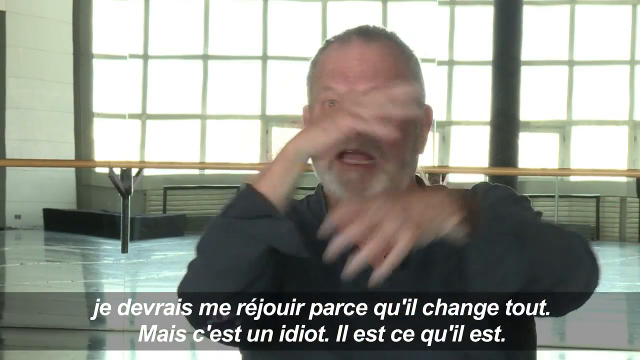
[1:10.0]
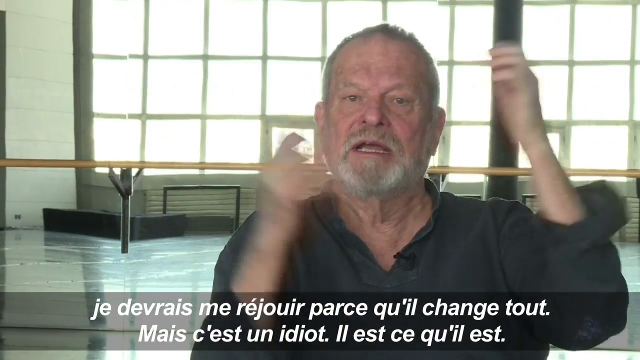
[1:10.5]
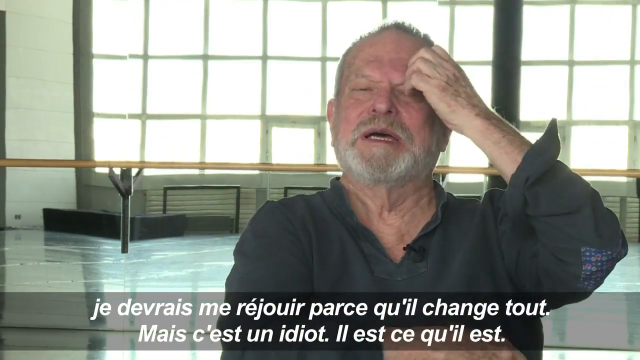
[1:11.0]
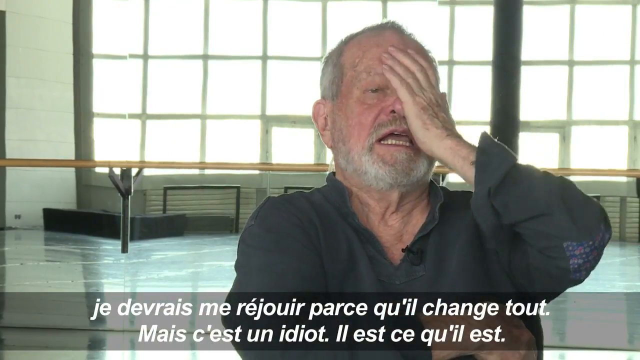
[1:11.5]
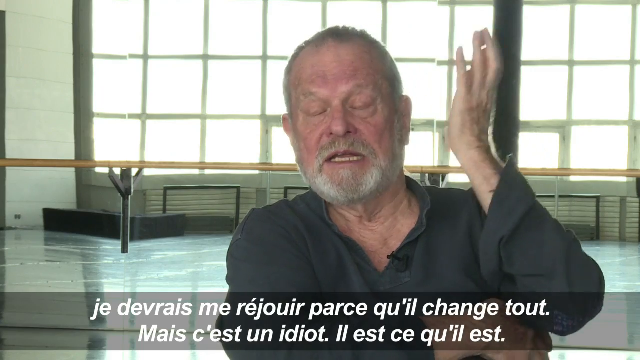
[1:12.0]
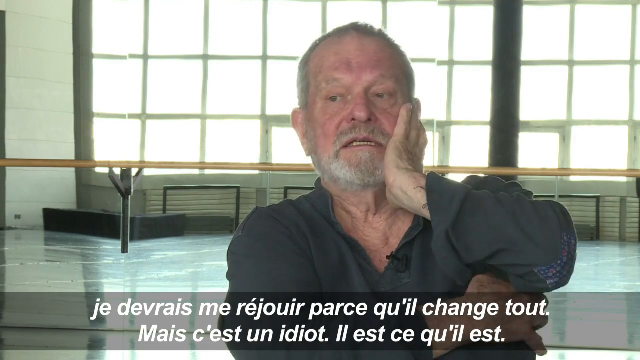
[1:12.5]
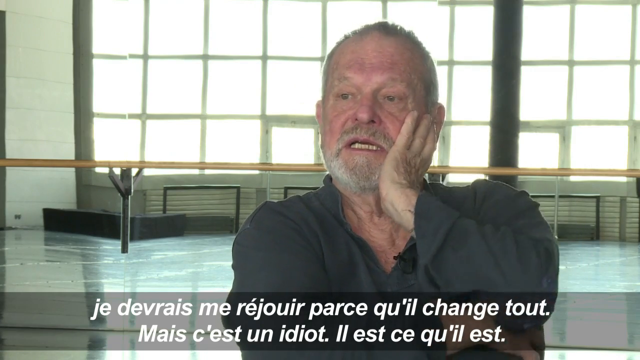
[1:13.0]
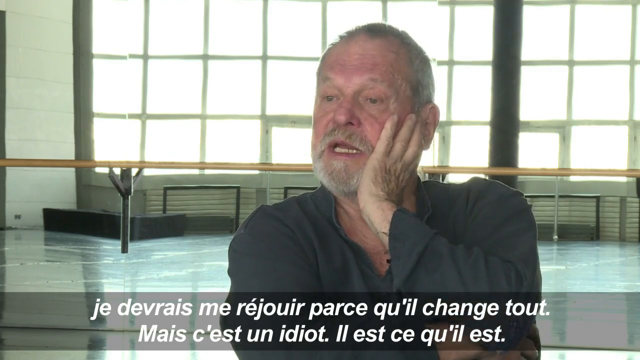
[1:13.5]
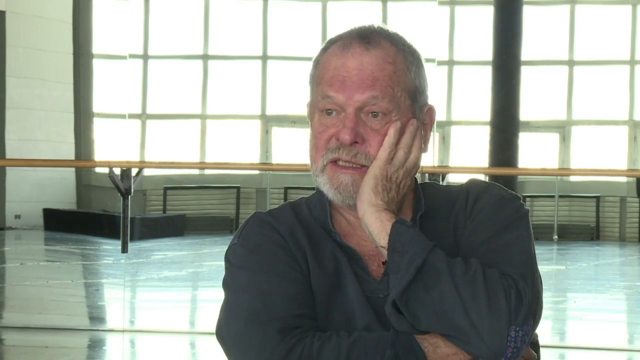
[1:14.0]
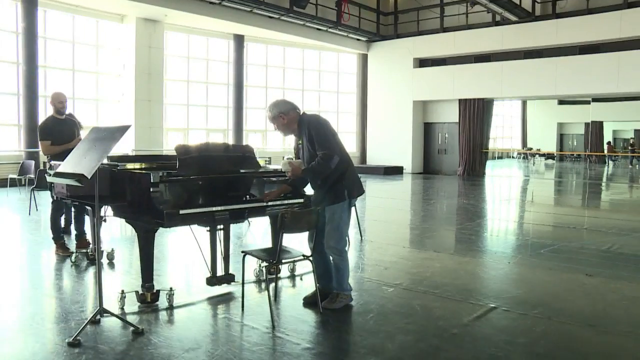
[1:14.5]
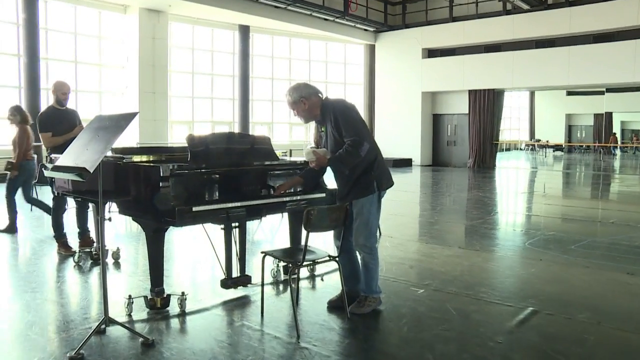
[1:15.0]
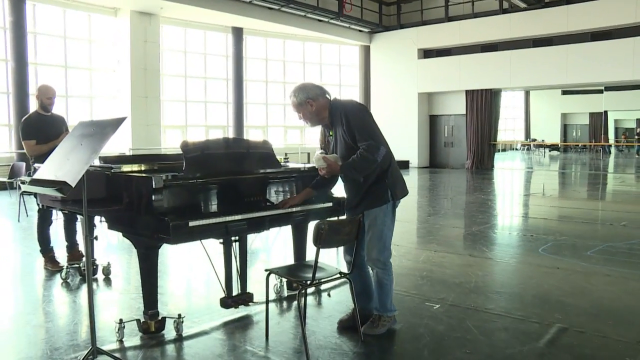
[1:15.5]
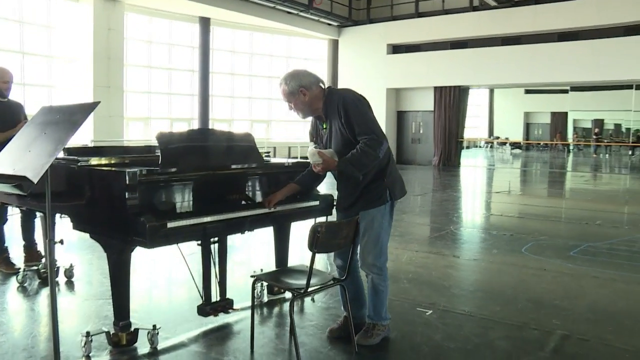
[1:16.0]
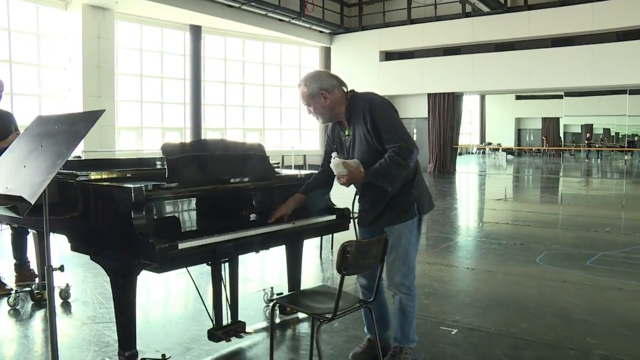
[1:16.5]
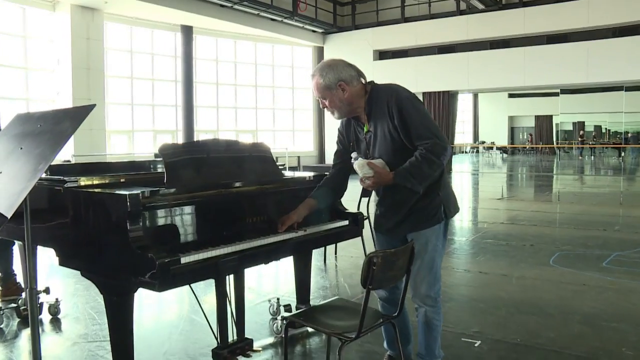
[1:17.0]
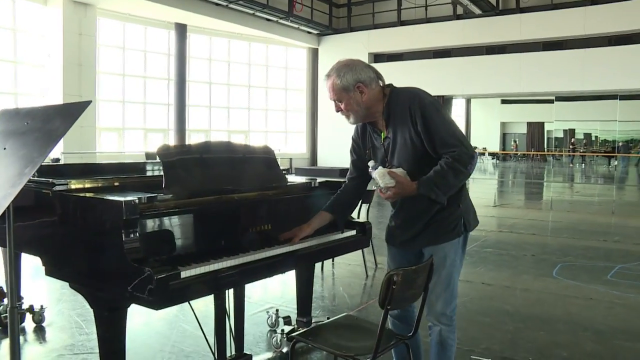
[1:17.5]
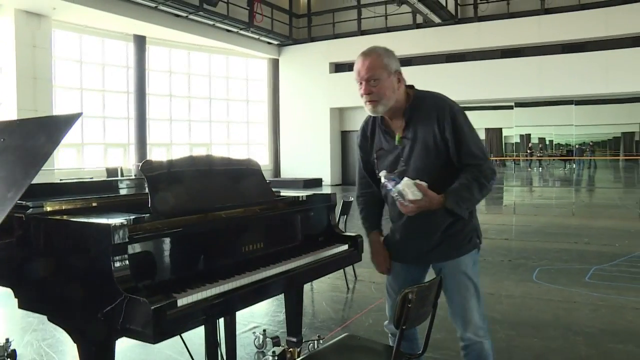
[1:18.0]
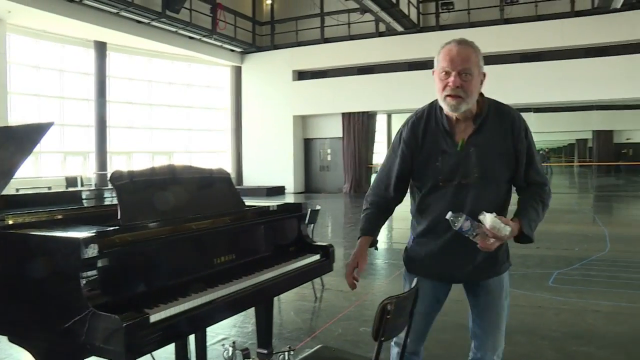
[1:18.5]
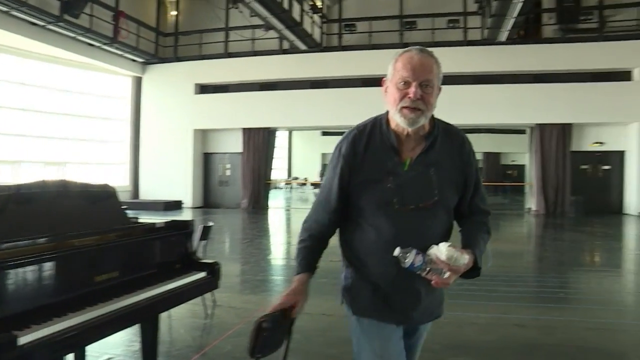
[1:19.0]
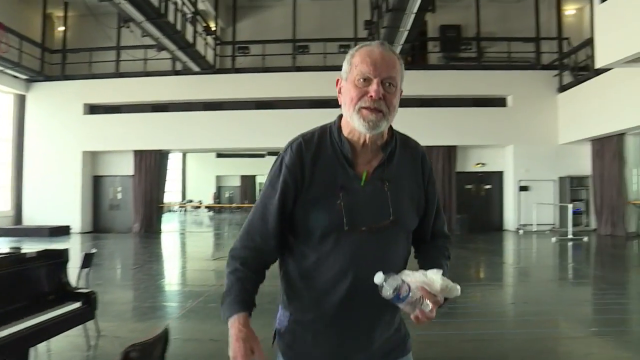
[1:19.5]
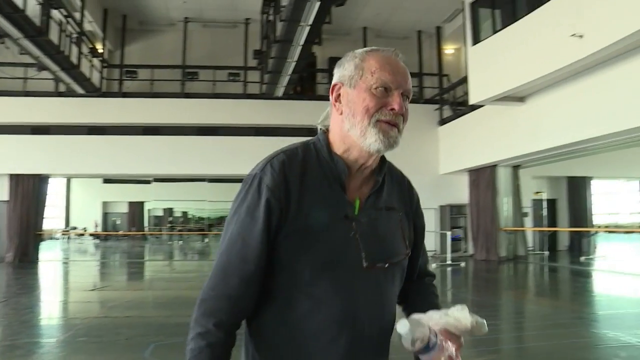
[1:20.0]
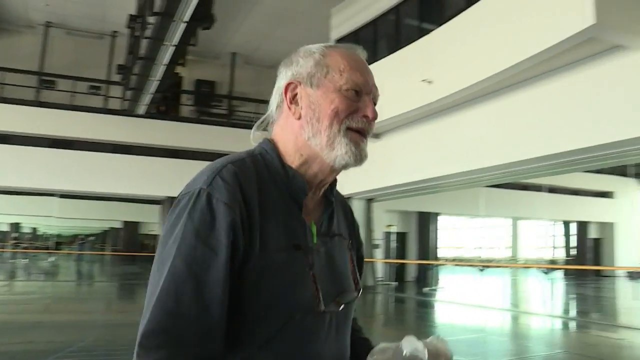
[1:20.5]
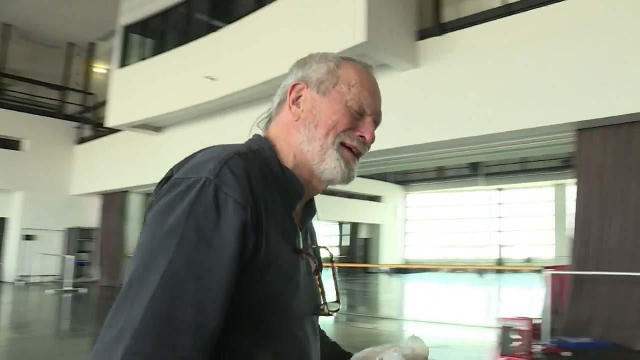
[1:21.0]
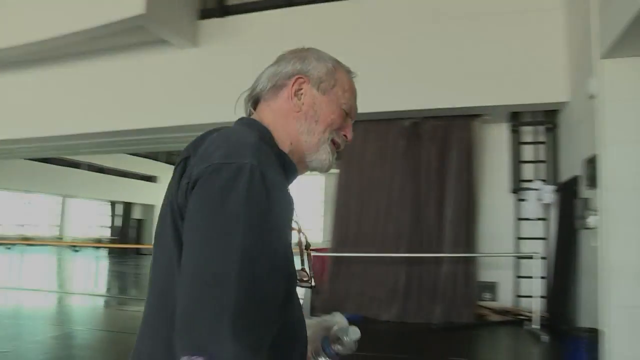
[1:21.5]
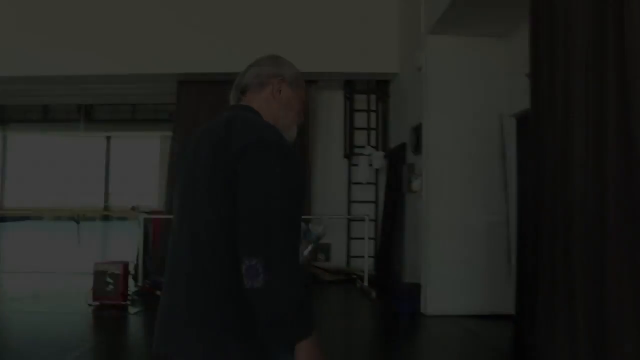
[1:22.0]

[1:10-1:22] The front-facing view shows the man from the chest up. He appears to be speaking in French, with text at the bottom explaining what he says. At one point he puts his hand to his head and closes his eyes, as if thinking about something; his hand then goes straight out for a moment and comes back to the side of his head. The video quickly changes to a zoomed-out angle showing him standing by a piano, his right hand seemingly doing something near the keys, while his other hand apparently holds a water bottle. He quickly faces the piano, seems to say something, and then walks off smiling. The video fades to black.